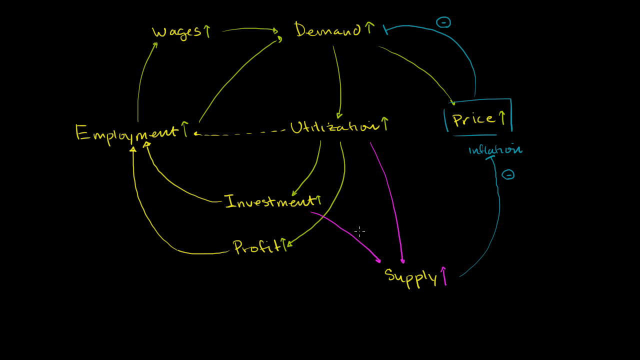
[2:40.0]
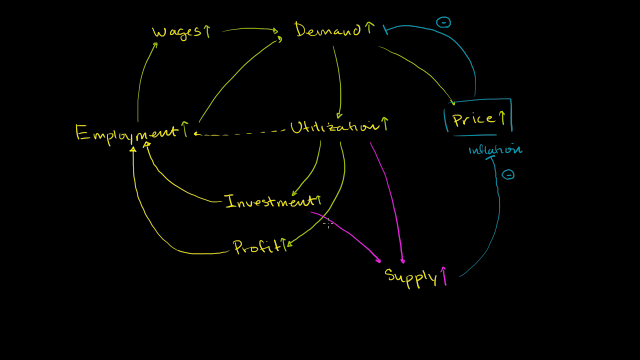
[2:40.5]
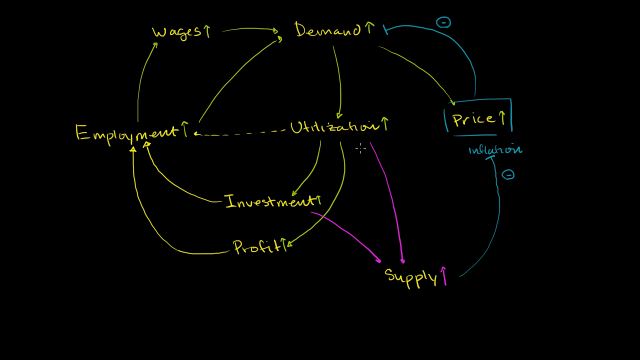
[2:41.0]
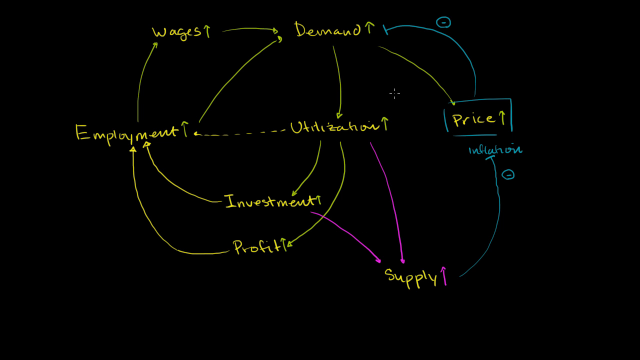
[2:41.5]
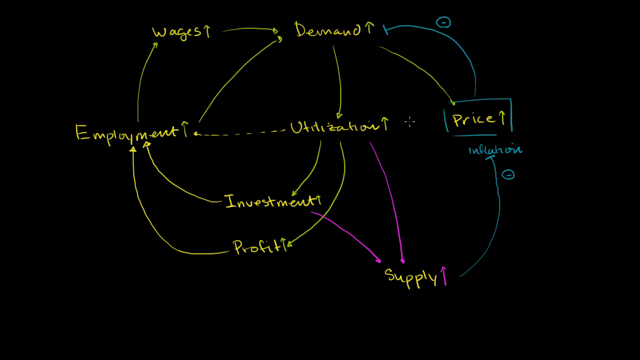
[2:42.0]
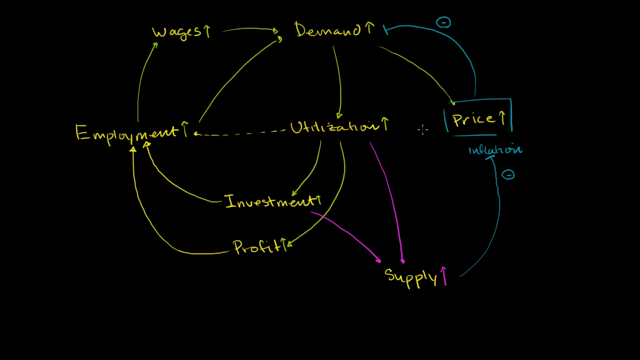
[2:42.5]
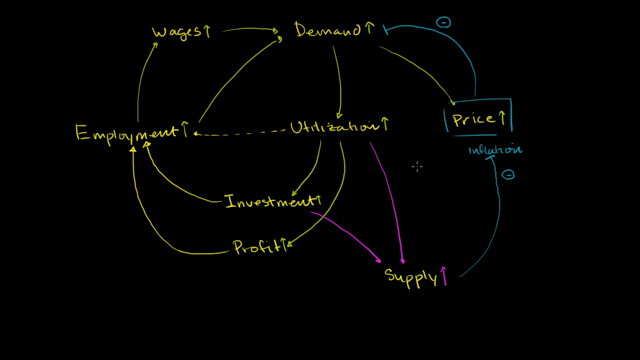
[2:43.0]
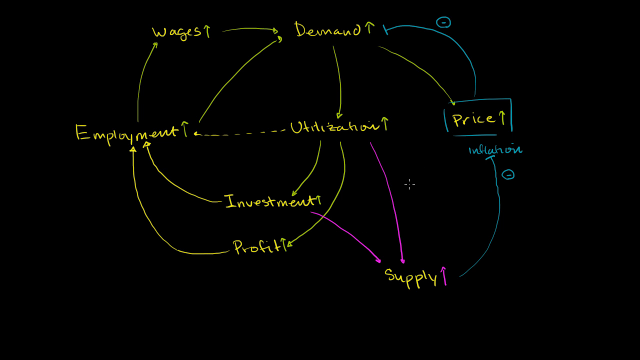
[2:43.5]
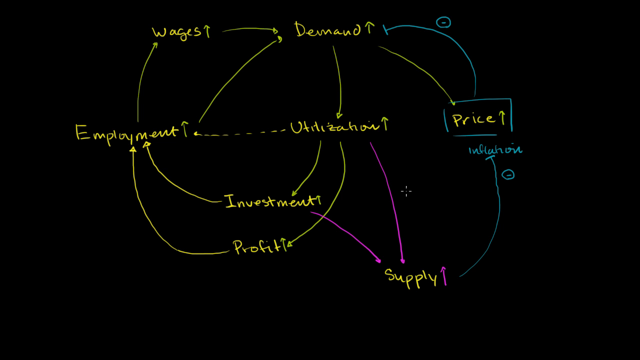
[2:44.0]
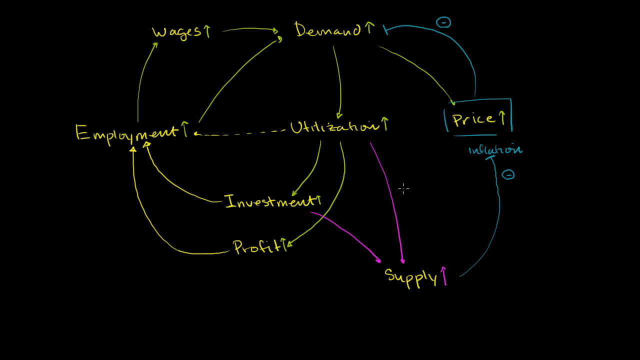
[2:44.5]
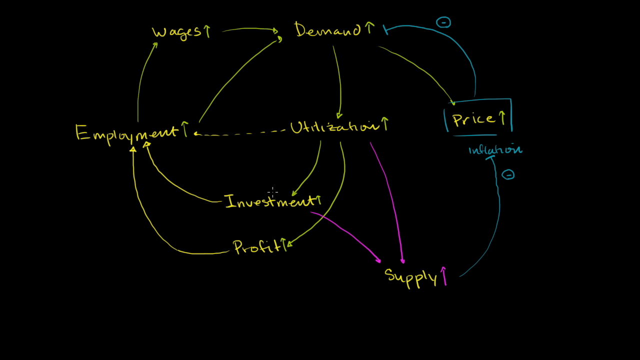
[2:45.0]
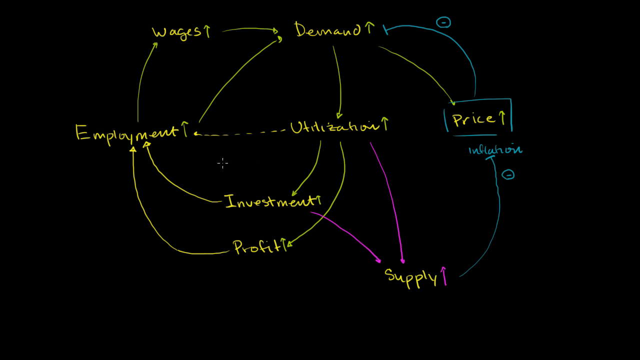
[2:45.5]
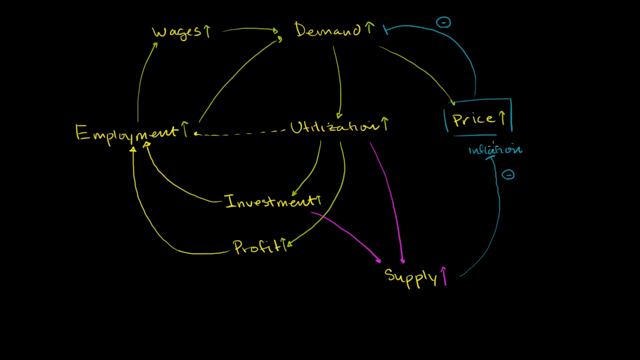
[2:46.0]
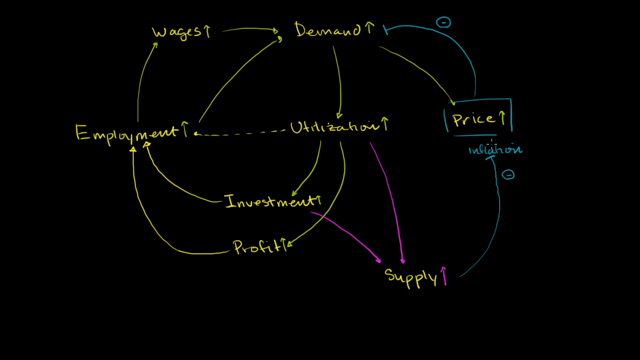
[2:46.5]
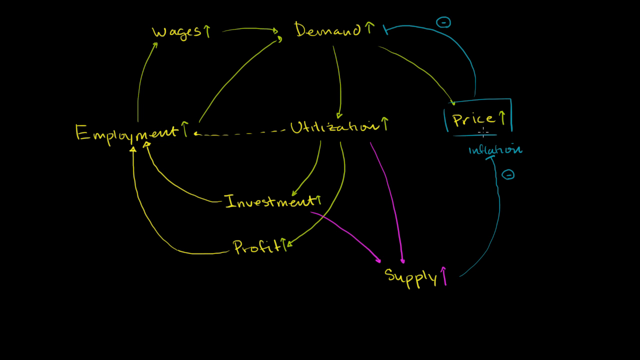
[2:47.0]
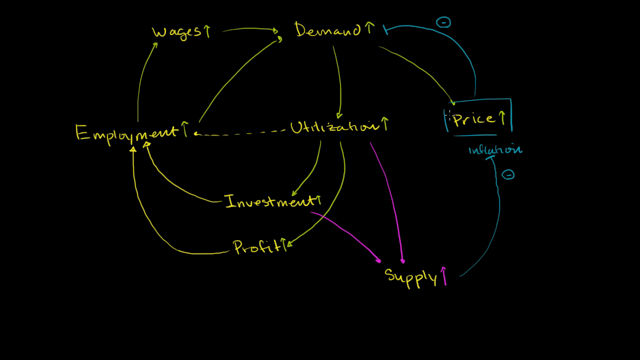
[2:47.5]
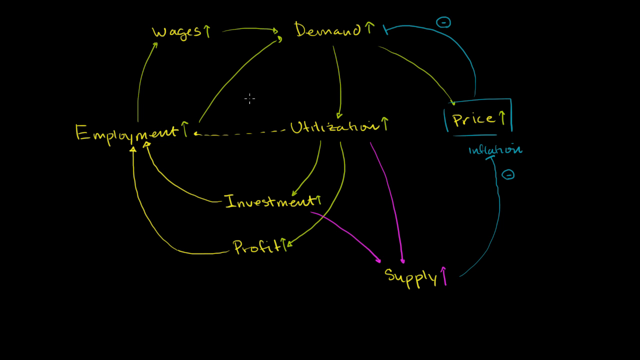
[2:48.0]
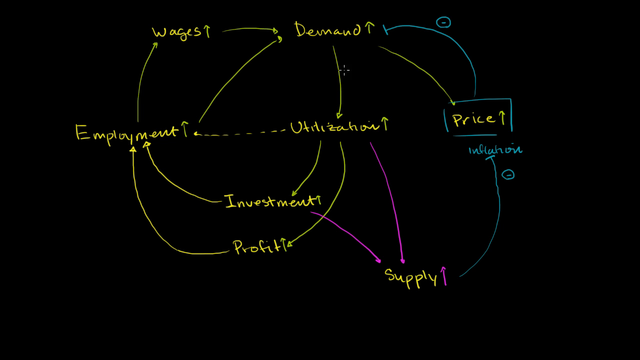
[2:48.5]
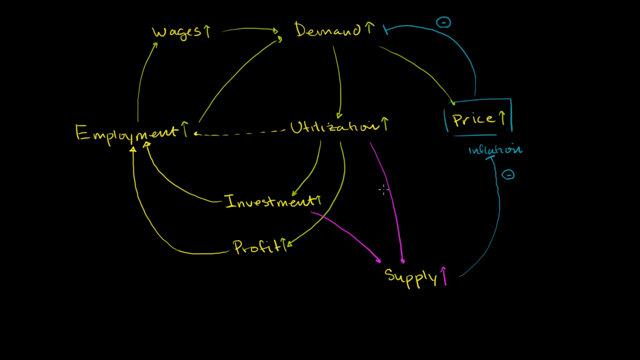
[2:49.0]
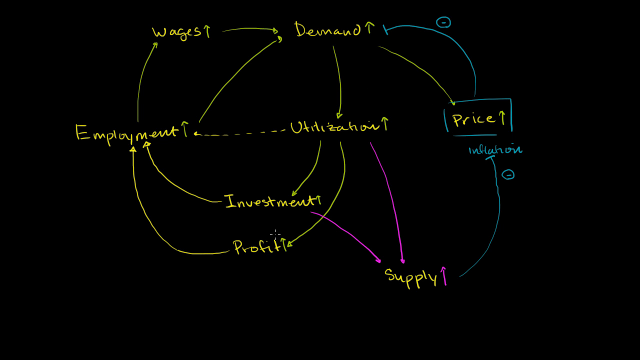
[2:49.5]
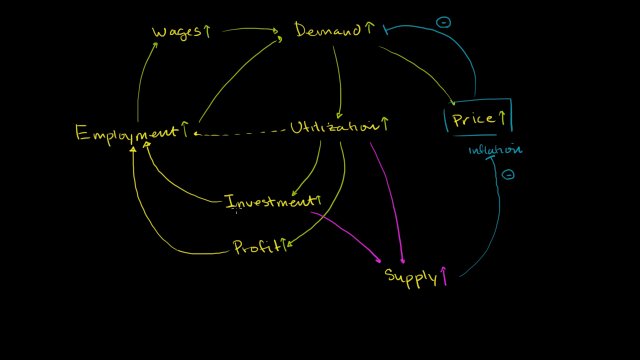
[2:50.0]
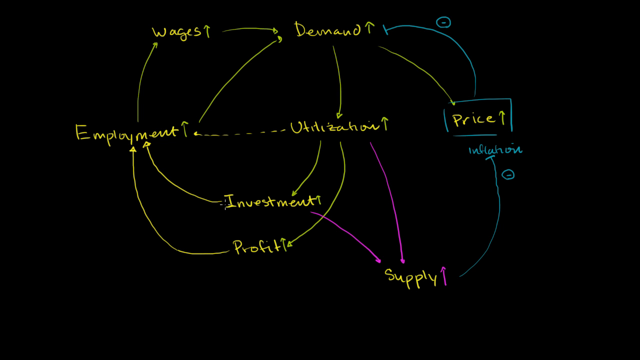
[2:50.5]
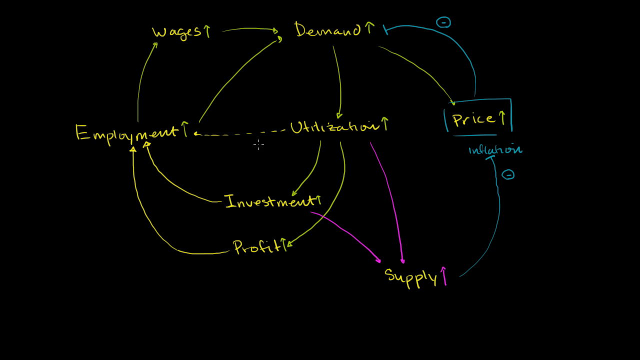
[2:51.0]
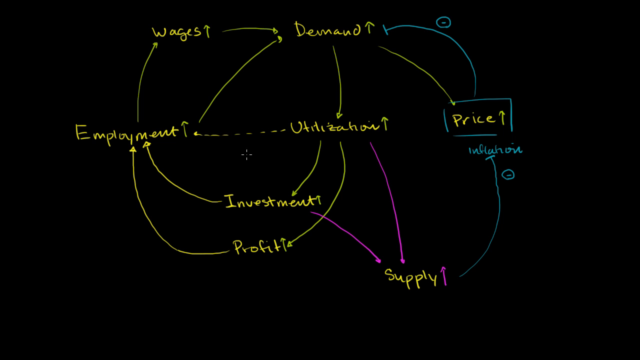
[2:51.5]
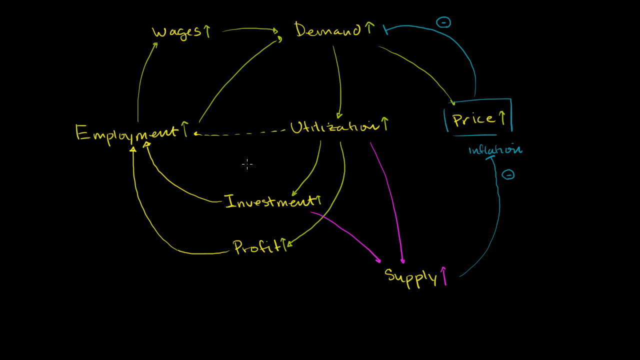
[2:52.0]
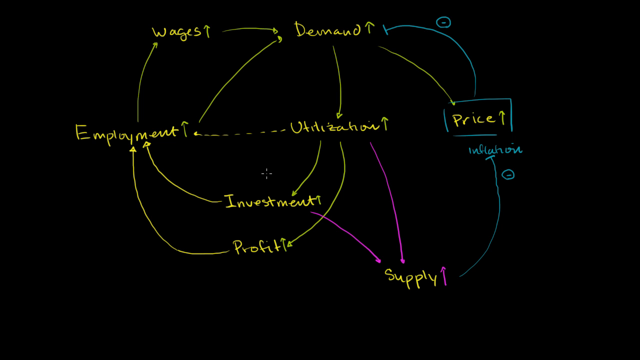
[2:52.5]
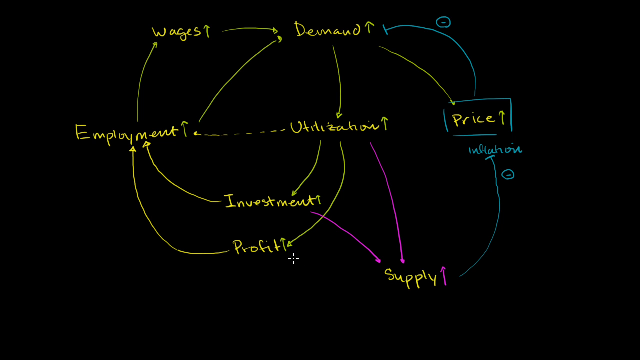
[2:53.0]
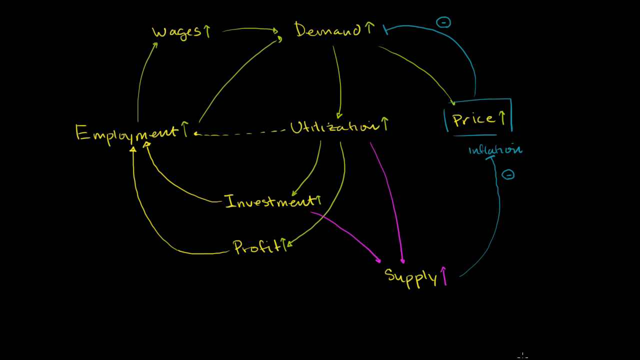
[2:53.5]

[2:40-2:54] Nothing new is added. The black screen shows the yellow words "Wages" and "Demand" at the top, "Employment," "Utilization" and "Price" in the middle, and "Investment," "Profit" below it and "Supply" below that toward the bottom. Yellow arrows point from "Employment" to "Wages," "Wages" to "Demand," "Employment" to "Demand," to "Utilization," "Demand" to "Price," "Utilization" to "Investment," "Utilization" to "Profit," "Investment" to "Employment," and "Profit" to "Employment." Purple arrows point from "Utilization" and "Investment" down to "Supply." The blue box surrounds "Price," with blue lines from "Price" to "Demand" and from "Supply" up to "Price," each with a negative sign, and the word "Inflation" written. A dotted yellow line goes from "Utilization" to "Employment."